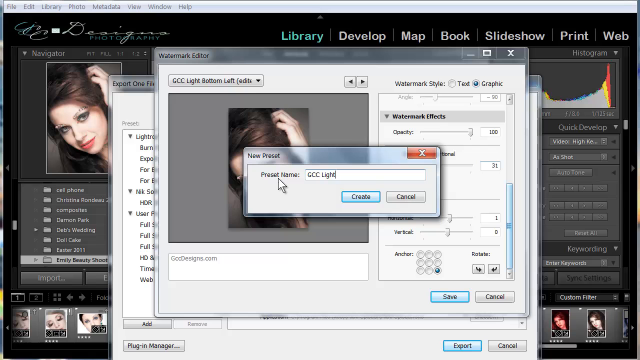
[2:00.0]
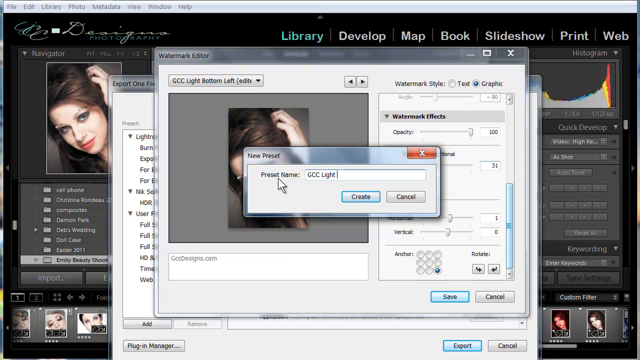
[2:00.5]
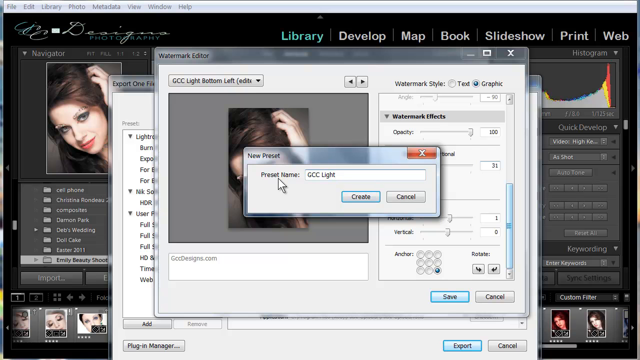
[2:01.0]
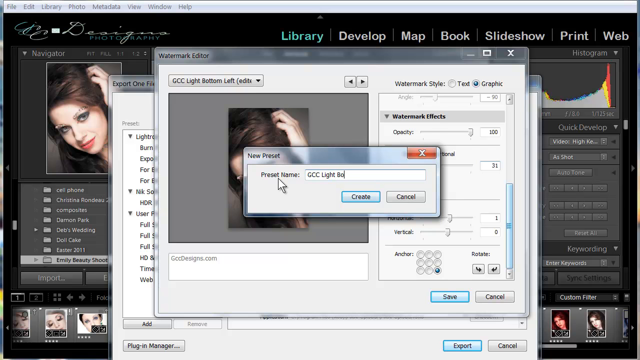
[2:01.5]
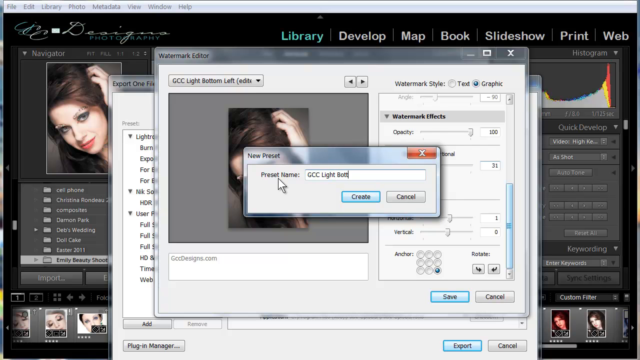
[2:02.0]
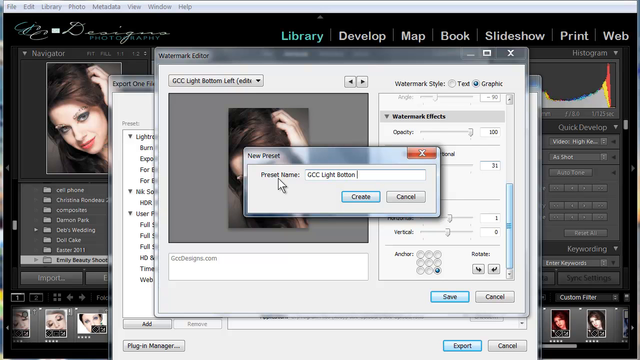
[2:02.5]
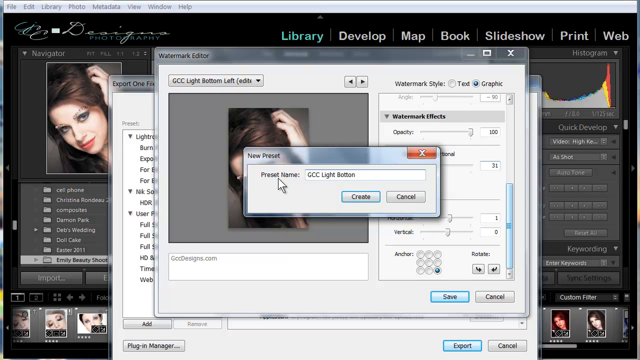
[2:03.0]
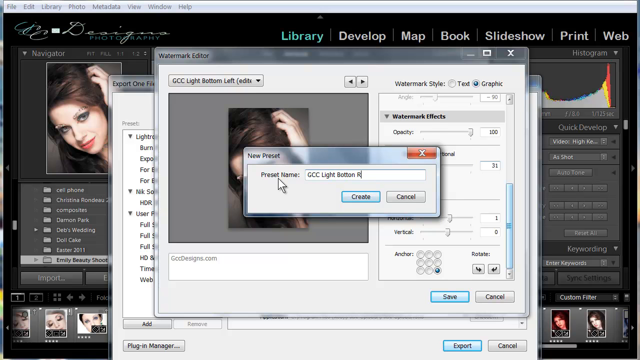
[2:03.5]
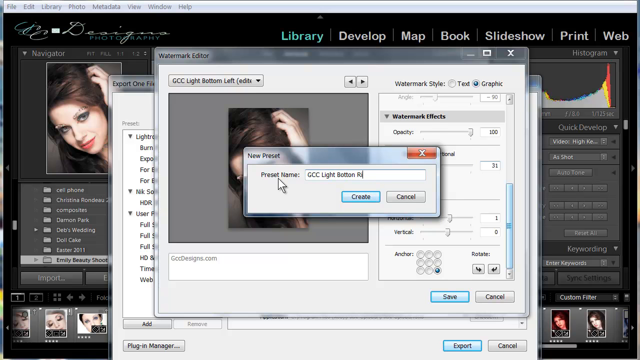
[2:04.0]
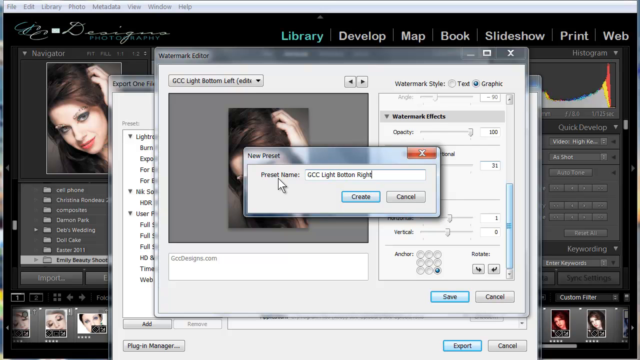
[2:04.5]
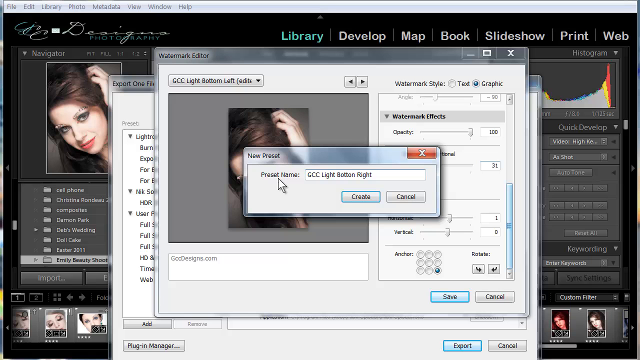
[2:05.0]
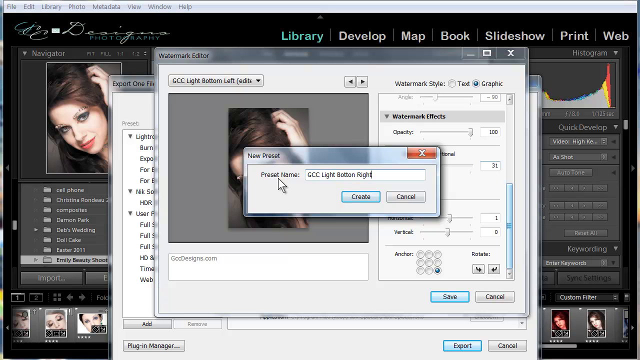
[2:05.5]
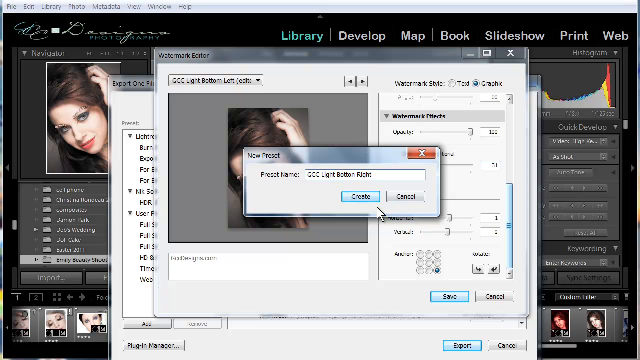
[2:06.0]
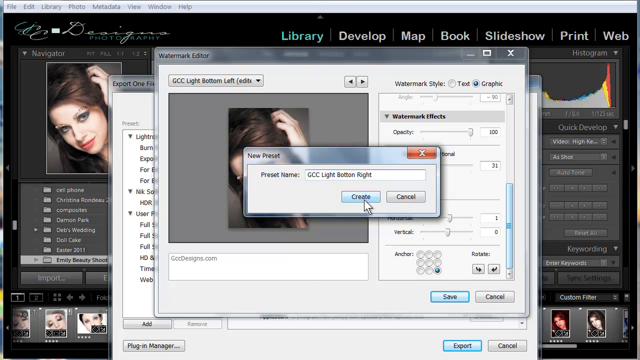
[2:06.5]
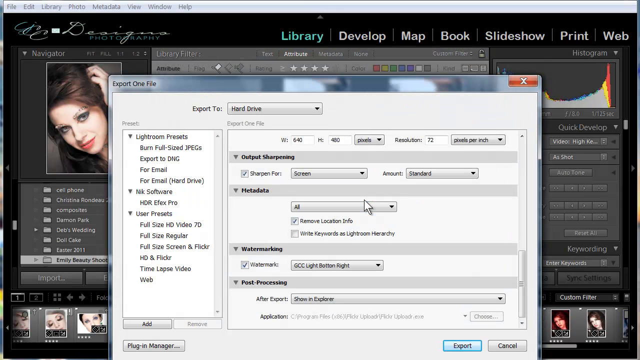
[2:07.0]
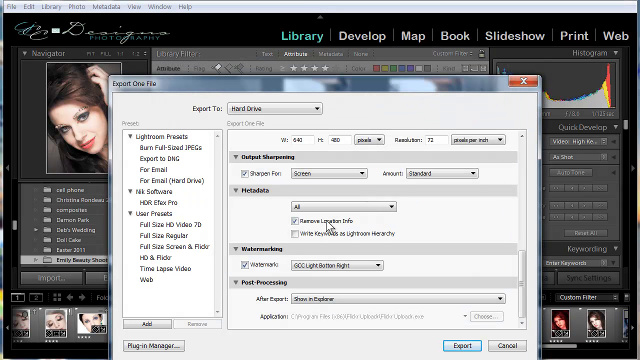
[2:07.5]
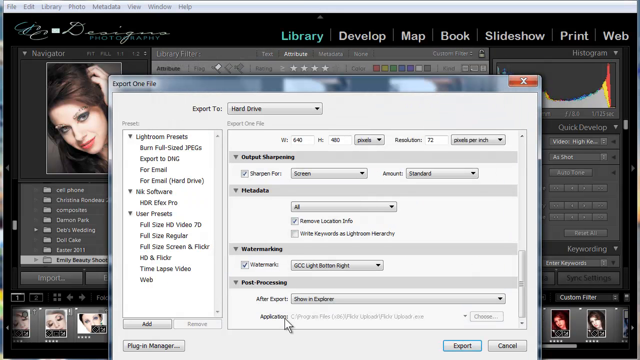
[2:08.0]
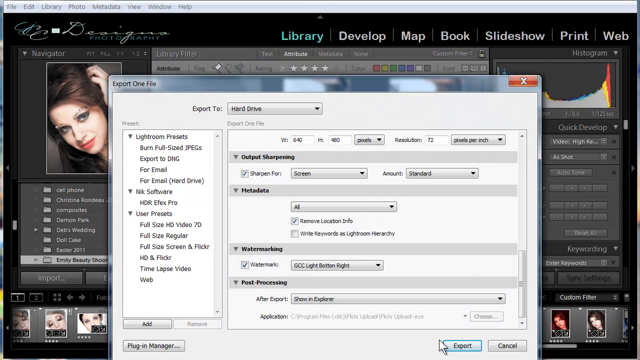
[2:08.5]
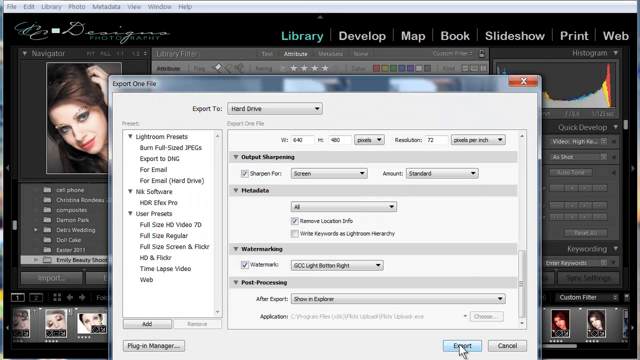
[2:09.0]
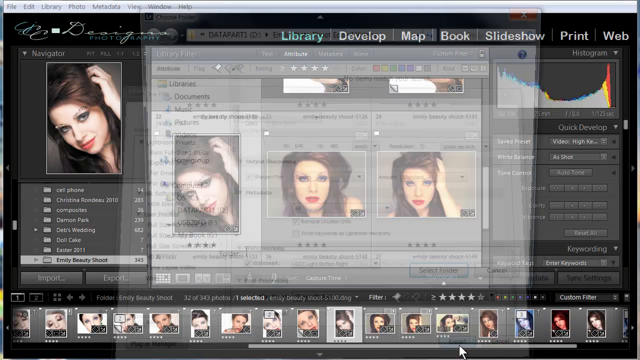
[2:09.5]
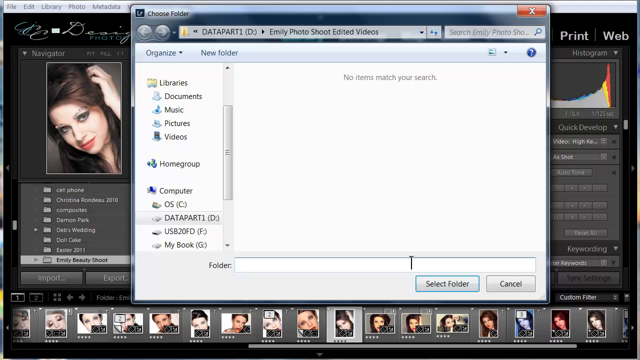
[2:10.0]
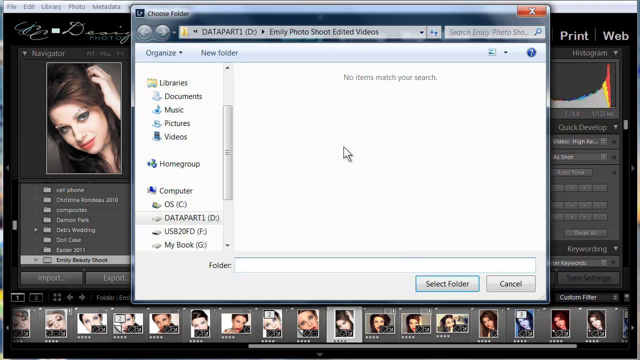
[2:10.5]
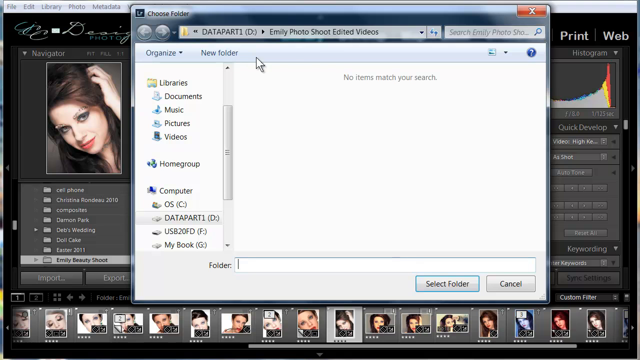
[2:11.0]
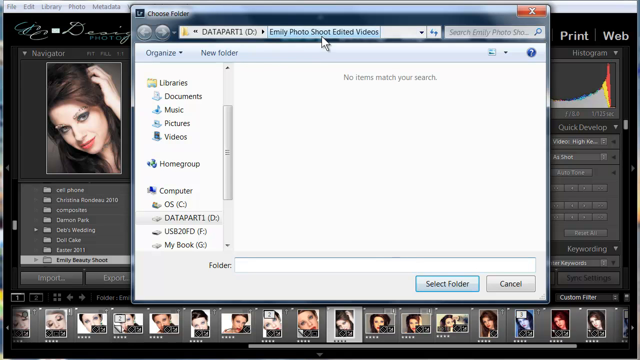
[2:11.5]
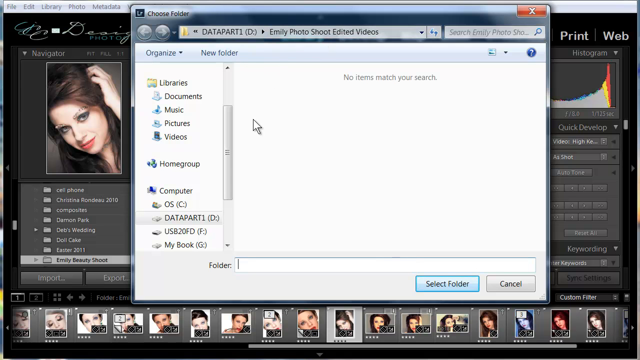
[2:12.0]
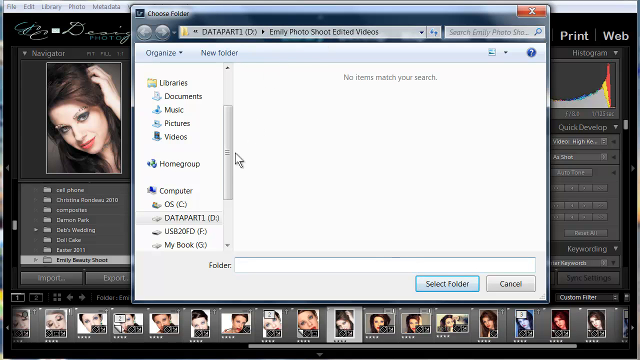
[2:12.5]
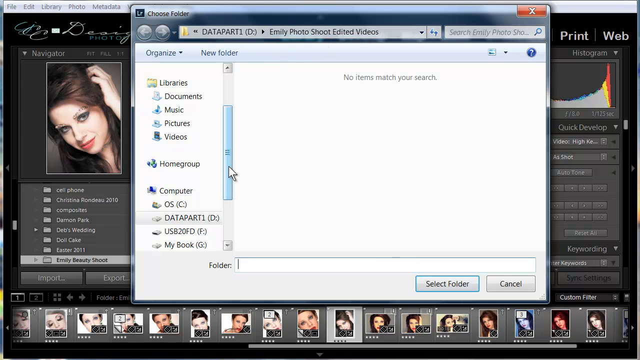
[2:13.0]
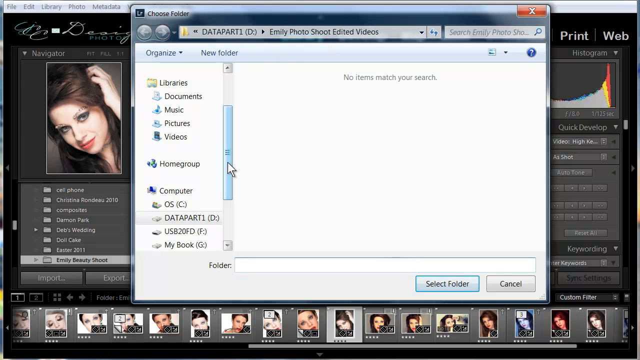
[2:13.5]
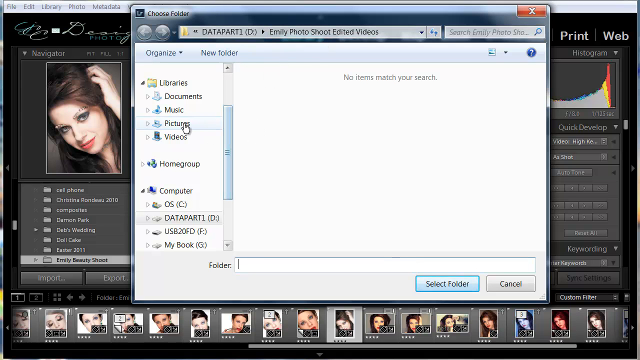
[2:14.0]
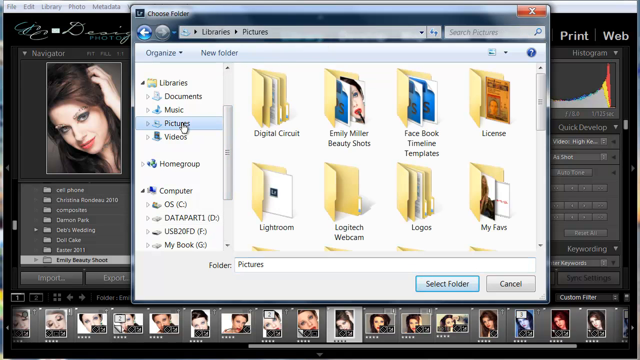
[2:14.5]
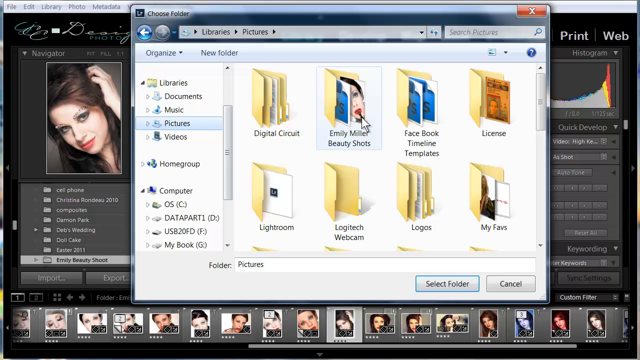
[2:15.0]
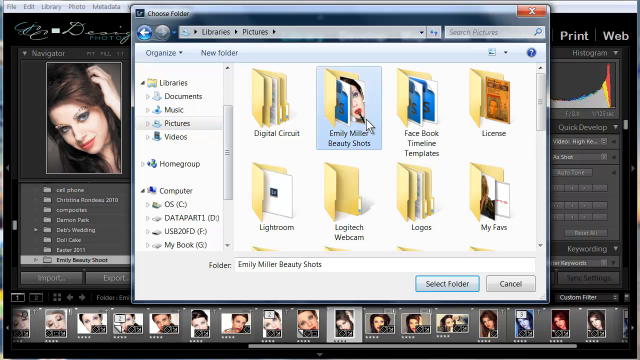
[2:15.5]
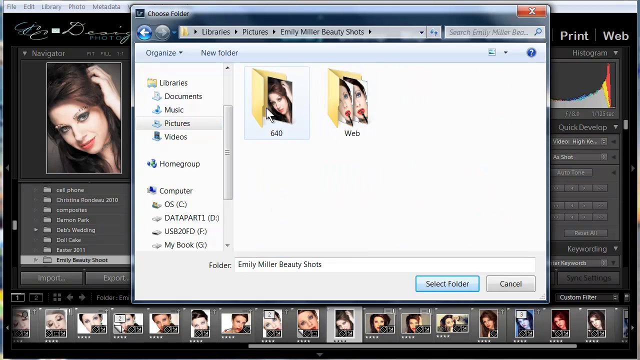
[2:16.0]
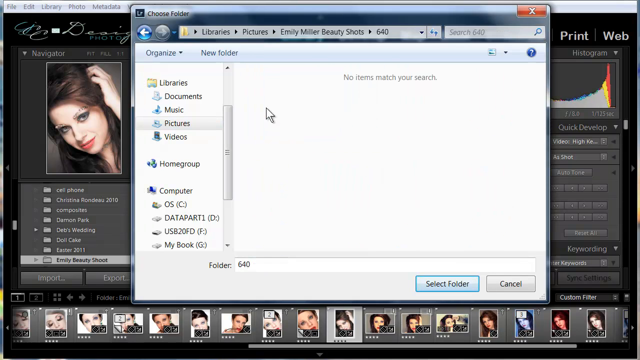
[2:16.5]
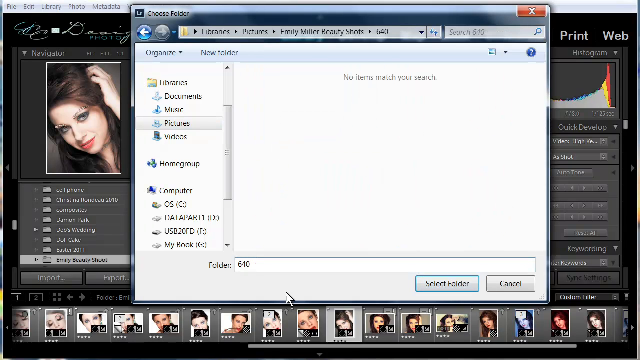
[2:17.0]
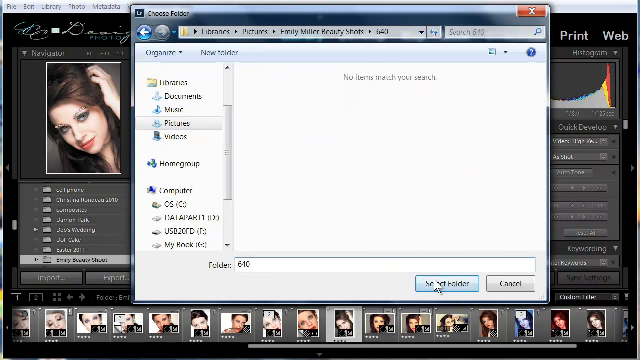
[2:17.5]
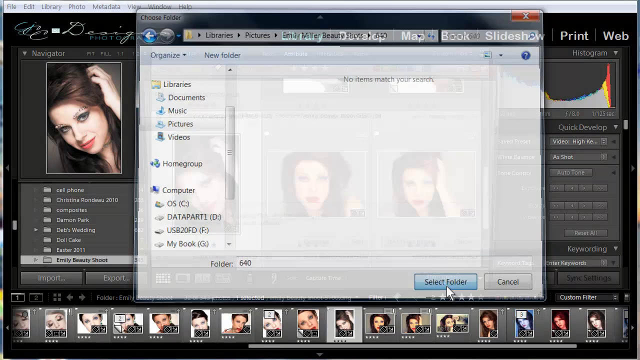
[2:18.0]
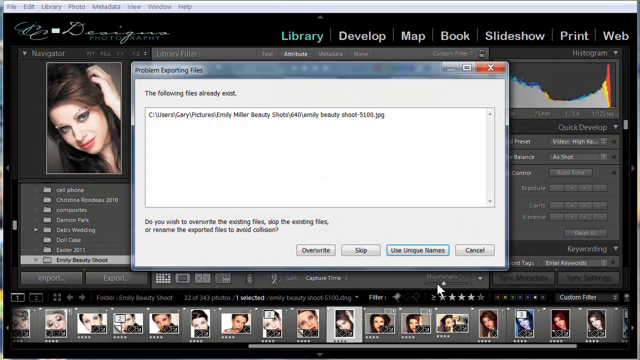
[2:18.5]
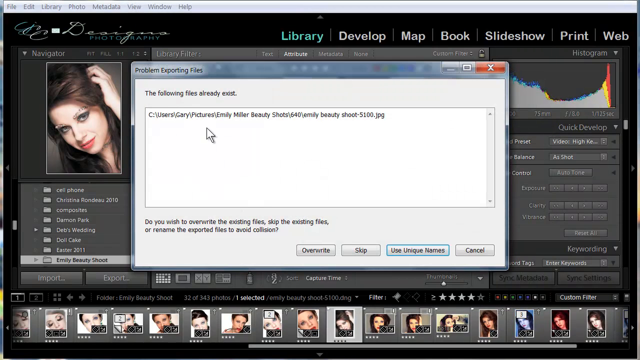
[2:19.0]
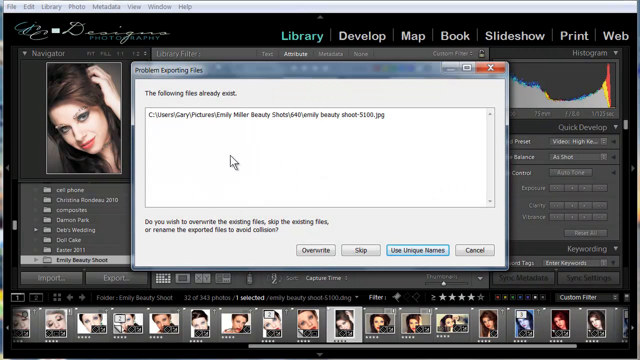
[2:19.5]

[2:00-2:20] A new preset window from the watermark editor is open, with the preset name apparently set to "GCC light", and the user is still typing, adding "bottom right" before clicking create. The view returns to the exporter menu settings. The user clicks export, which opens the file explorer with a prompt to choose a folder. The user clicks the Pictures folder, then "Emily Miller Beauty Shots", then a folder called "640", which shows no items, at least of this file type. After the folder is selected, an error message appears: "Problem exporting files. The following files already exist." It gives the file path Emily Miller Beauty Shots, 640, Emily Beauty Shot 5100.jpg, followed by "already exists. Do you wish to overwrite the existing files, skip the existing files, or rename the exported files to avoid collision?" Four options are offered: overwrite, skip, use unique names and cancel. The user chooses overwrite.